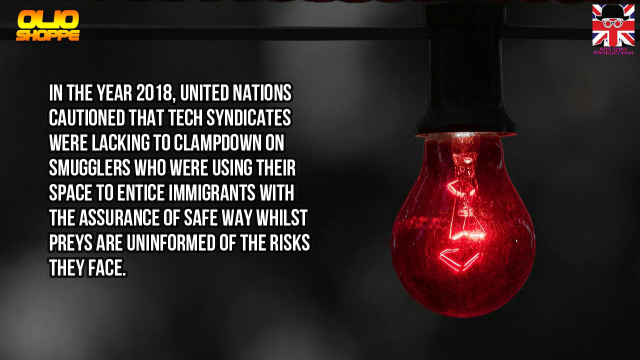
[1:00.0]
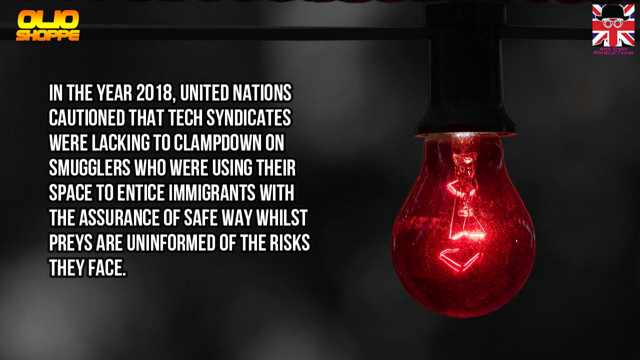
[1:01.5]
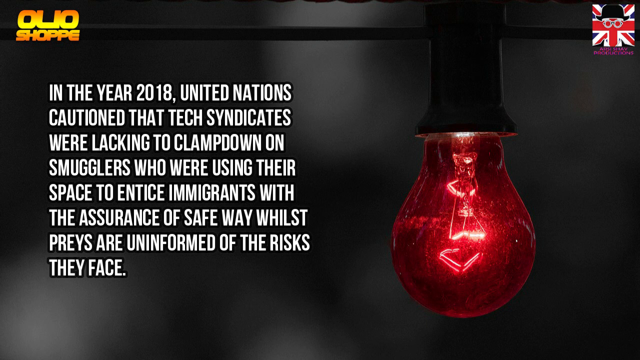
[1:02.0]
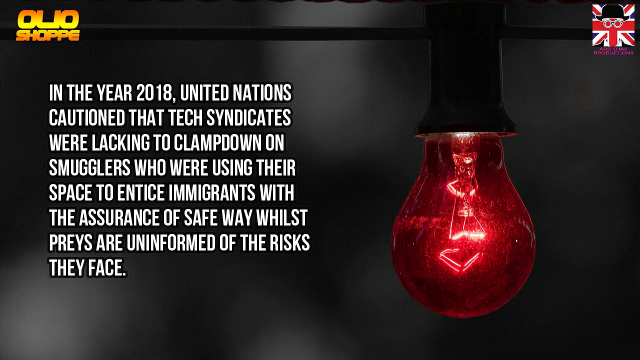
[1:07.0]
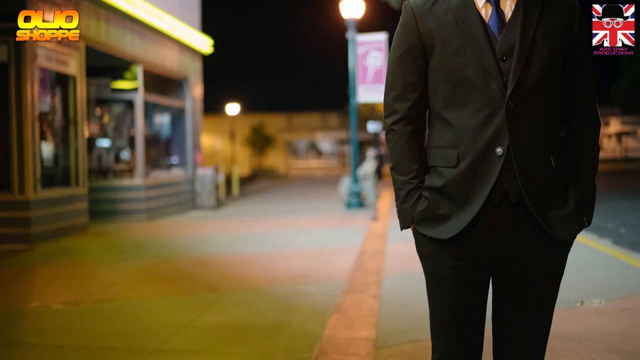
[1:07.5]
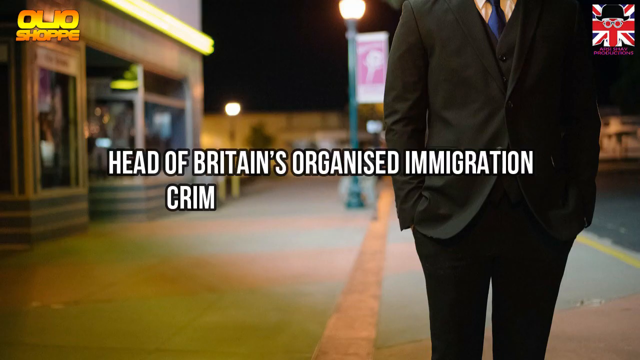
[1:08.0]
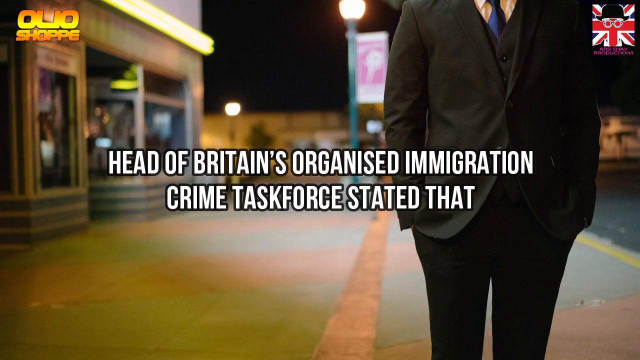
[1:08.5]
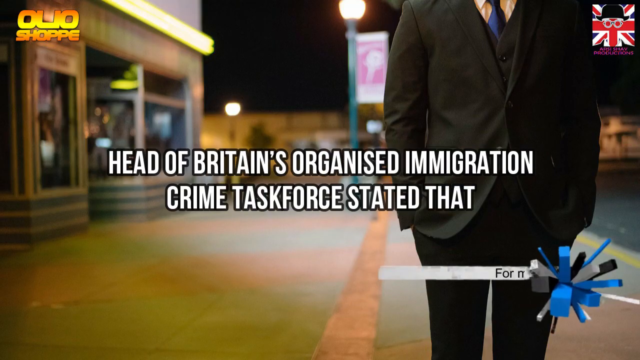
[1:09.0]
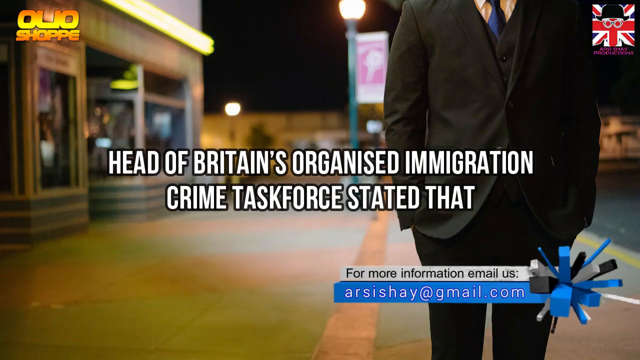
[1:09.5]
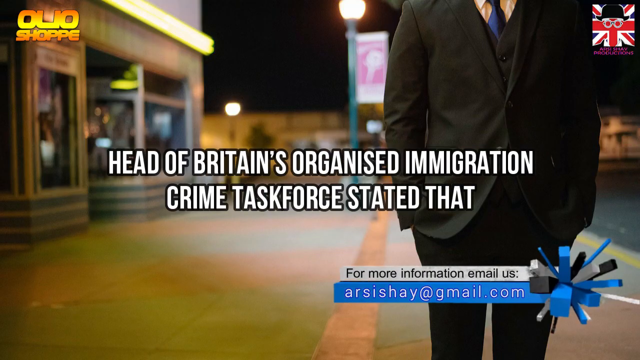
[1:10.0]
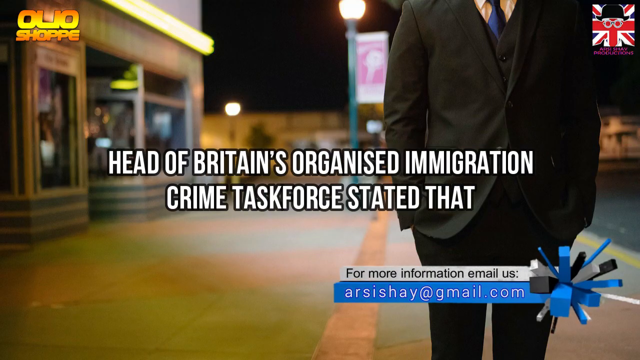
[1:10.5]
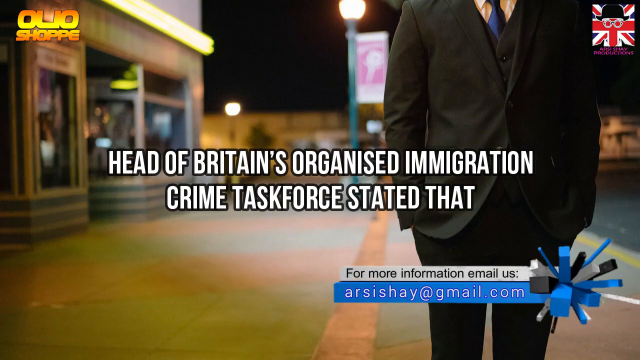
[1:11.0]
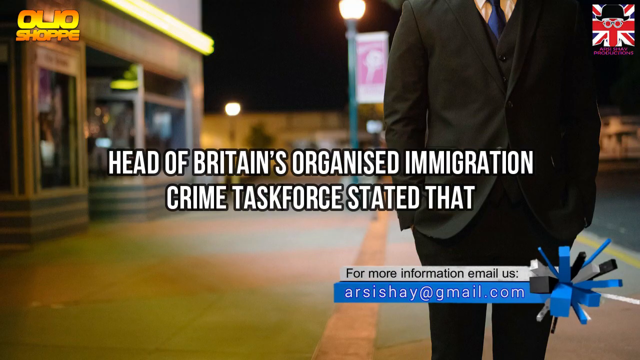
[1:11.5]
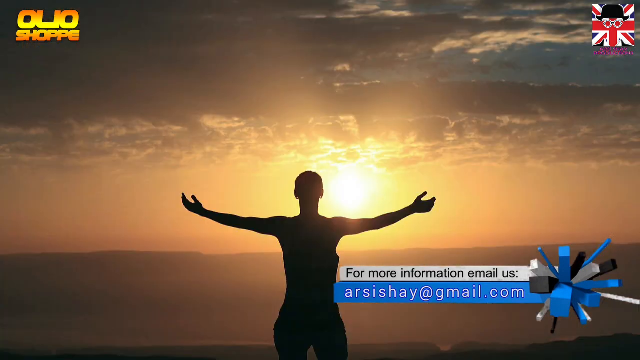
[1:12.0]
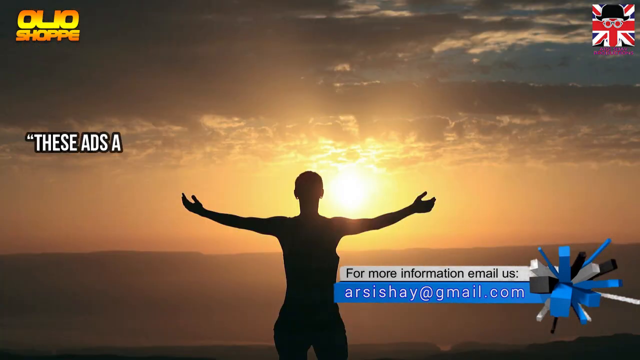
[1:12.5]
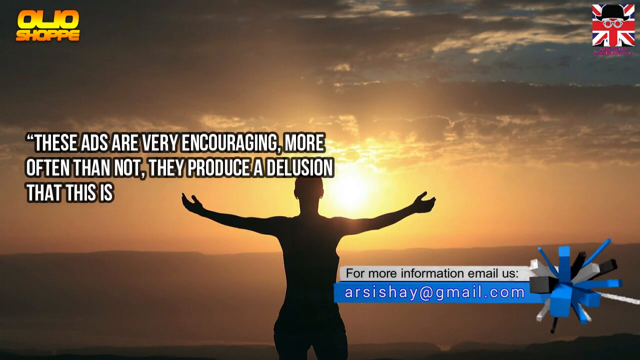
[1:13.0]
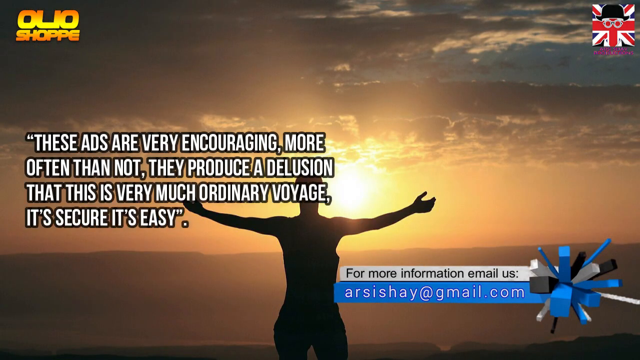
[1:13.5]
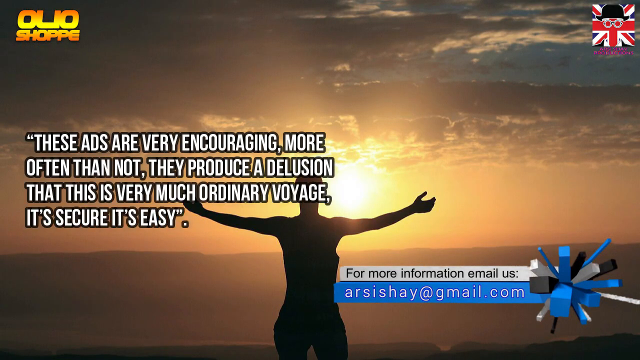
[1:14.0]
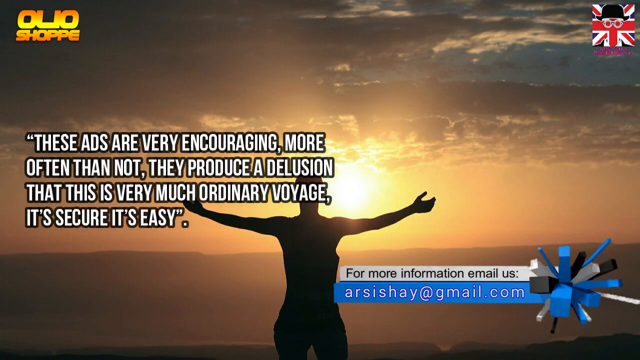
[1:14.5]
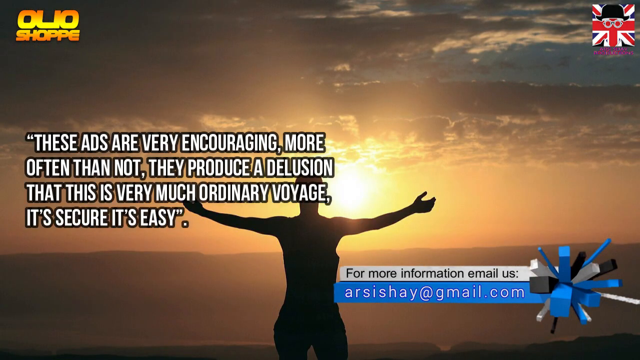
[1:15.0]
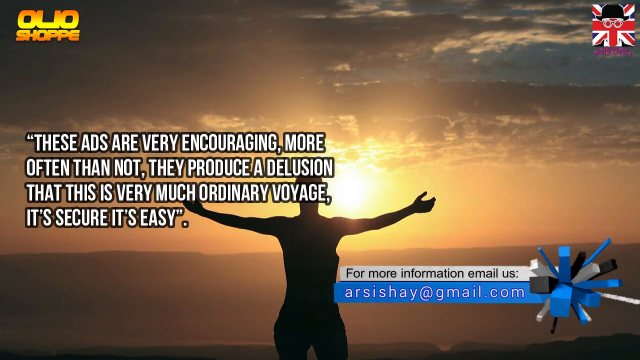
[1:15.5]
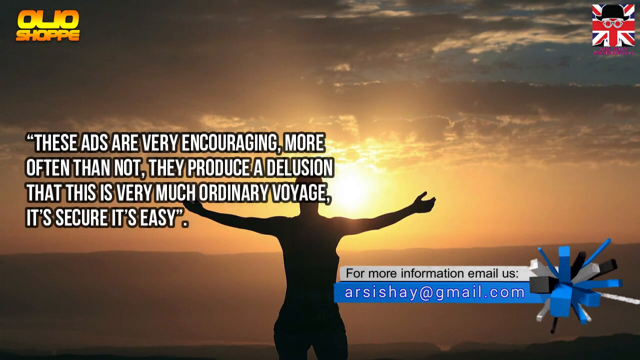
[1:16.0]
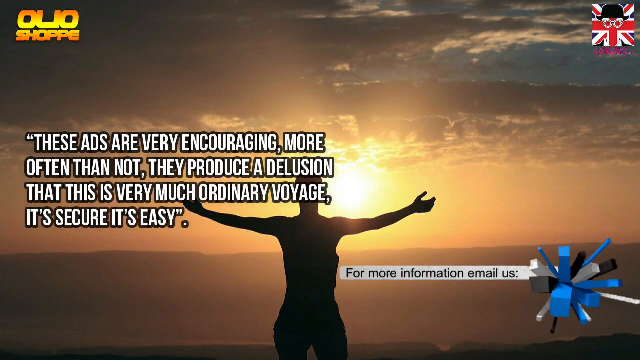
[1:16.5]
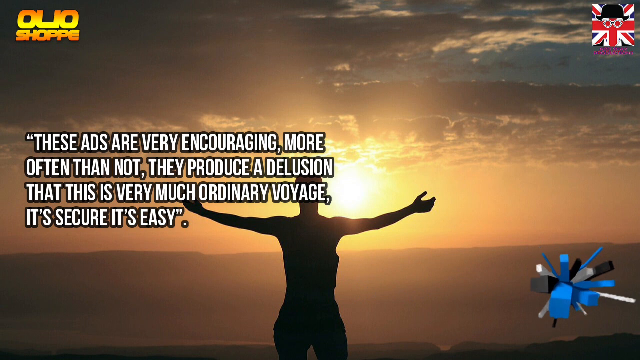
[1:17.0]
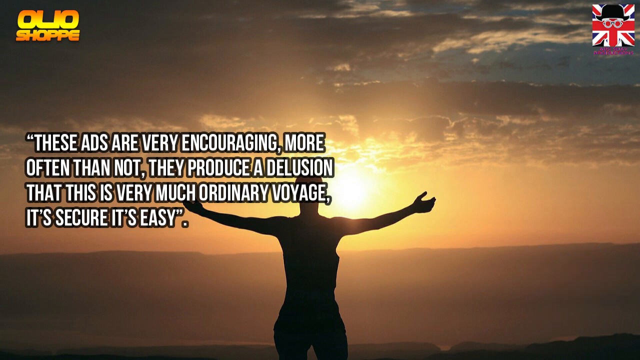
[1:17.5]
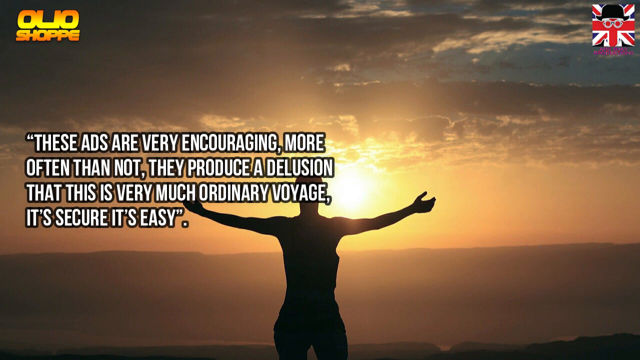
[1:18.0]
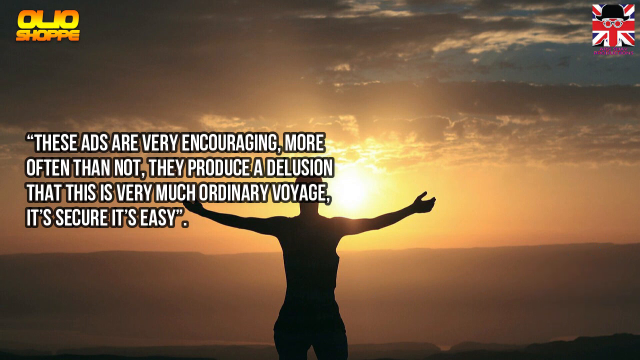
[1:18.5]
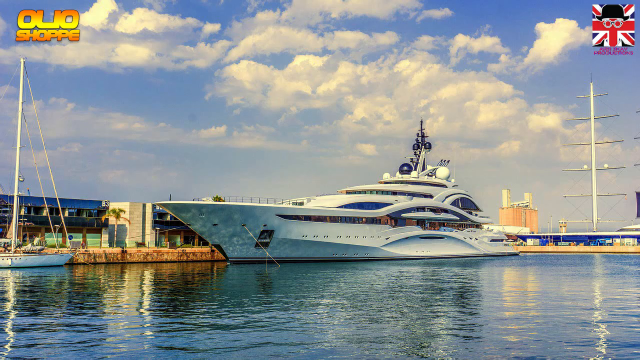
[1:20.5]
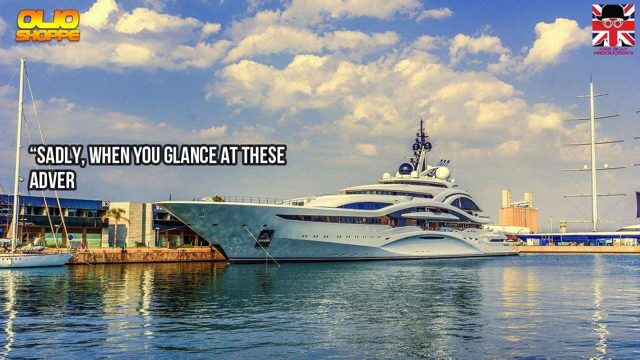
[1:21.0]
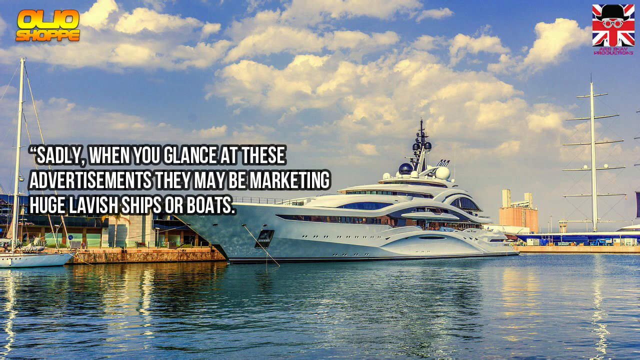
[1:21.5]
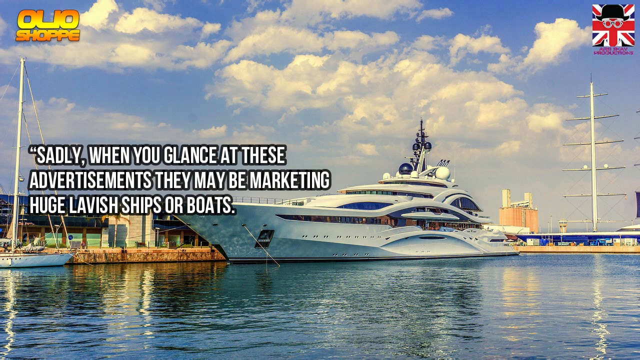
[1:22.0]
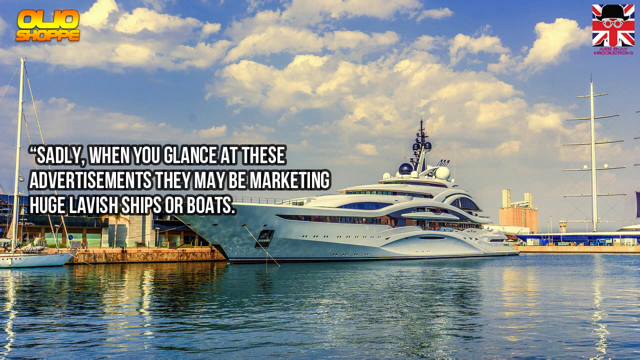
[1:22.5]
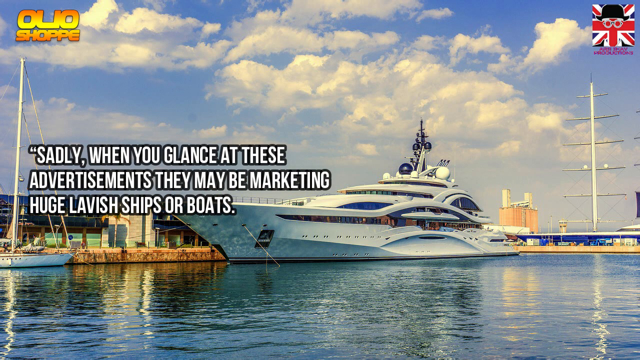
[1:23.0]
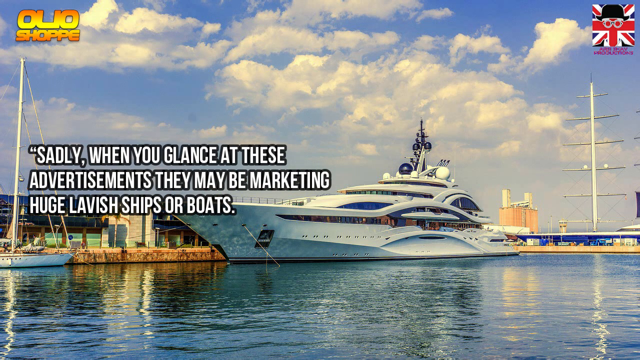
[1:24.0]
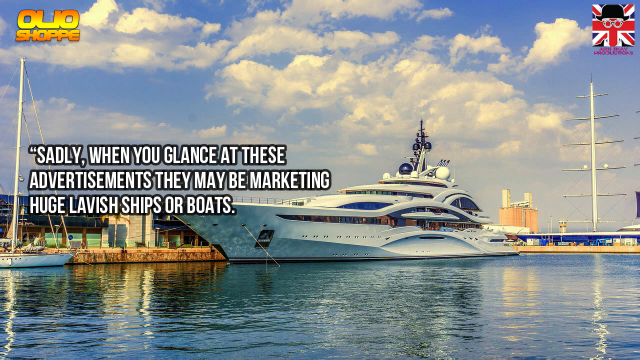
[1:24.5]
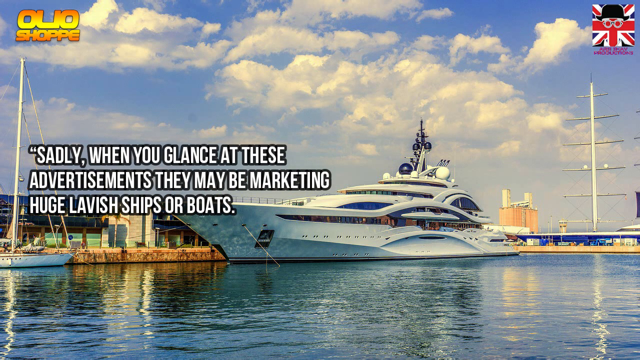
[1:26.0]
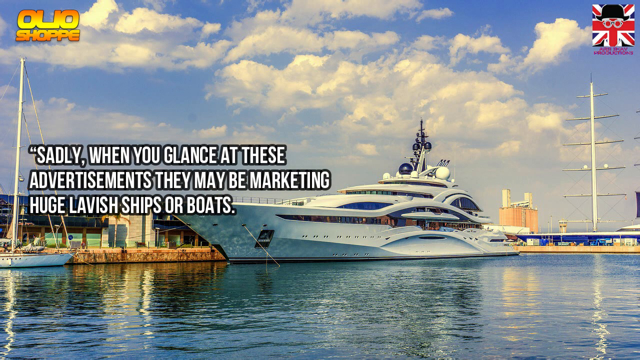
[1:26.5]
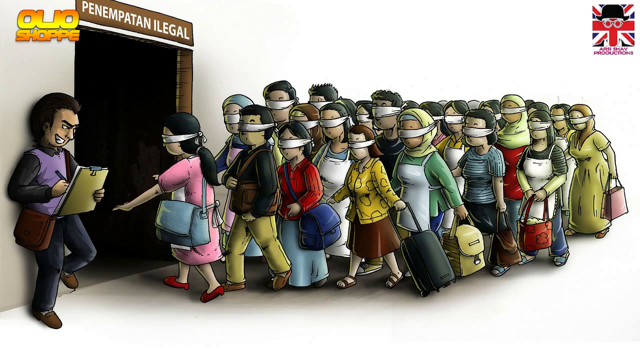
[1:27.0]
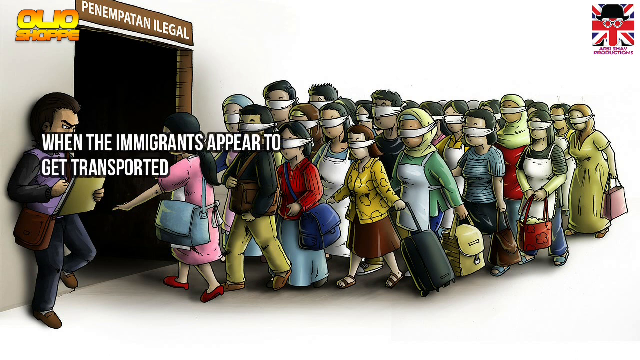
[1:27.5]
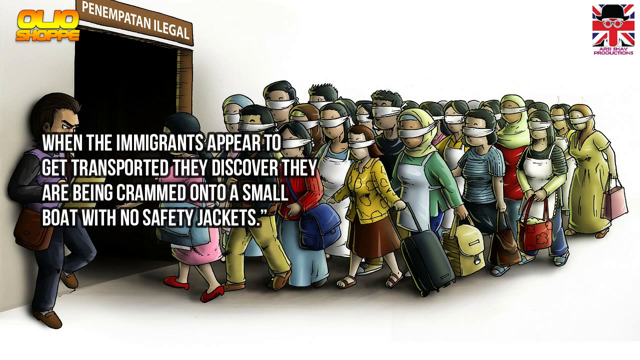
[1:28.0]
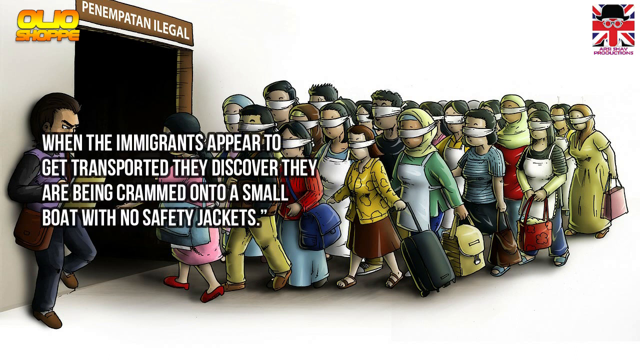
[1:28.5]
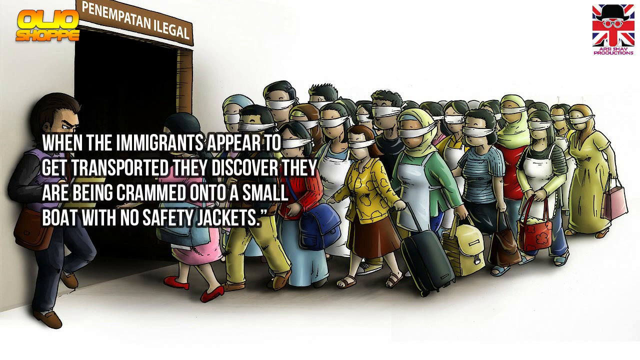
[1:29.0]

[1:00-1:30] The red flag is on the back of the yacht, and the back of the yacht faces the viewer. The red light bulb gives way to a man in a suit walking on a street toward the camera, his head not visible, with white text over the top reading "Head of Britain's Organized Immigration Crime Task Force stated that." Next, a person faces a sunset, seen only in silhouette with arms outstretched. White text on the left appears to read "these ads are very encouraging. More often than not, they produce a delusion that this is very much ordinary voyage. It's secure. It's easy." A couple of times, a white text box pops up on the right reading "for more information, email us," with a social media handle or website underneath in white text on a blue text box, and to its right a blue, white and black graphic, almost like a little cluster of different blocks coming out of it. The scene switches to a side view of a yacht, with white text on the left reading "sadly, when you glance at these advertisements, they may be marketing huge lavish ships or boats." Then a cartoon image shows a large group of blindfolded people dressed in different outfits, carrying bags, purses and suitcases. White text reads "when the immigrants appear to get transported, they discover they are being crammed onto a small boat with no safety jacket." A somewhat evil-looking man with dark black hair, dark pants and a dark jacket stands against a wall next to a doorway they are all going through; his brows make him look angry. Above the doorway, a brown sign reads "Penampatan ILEGAL" in white all caps.